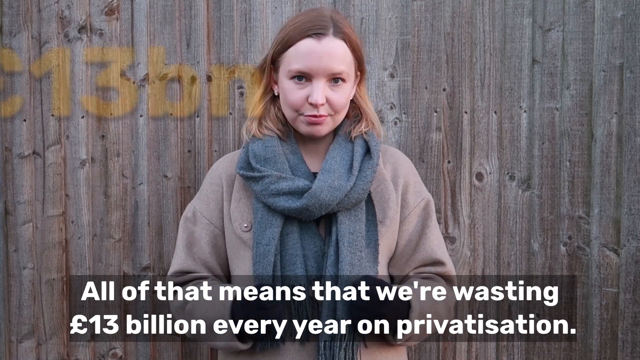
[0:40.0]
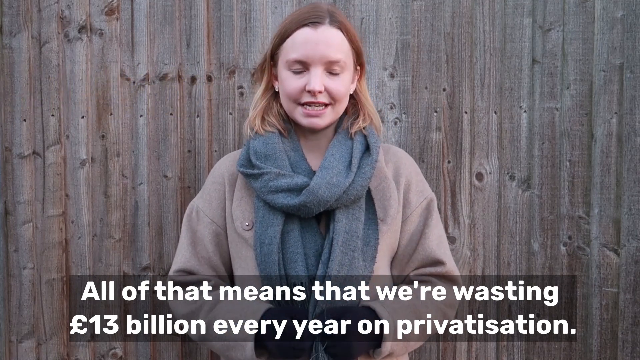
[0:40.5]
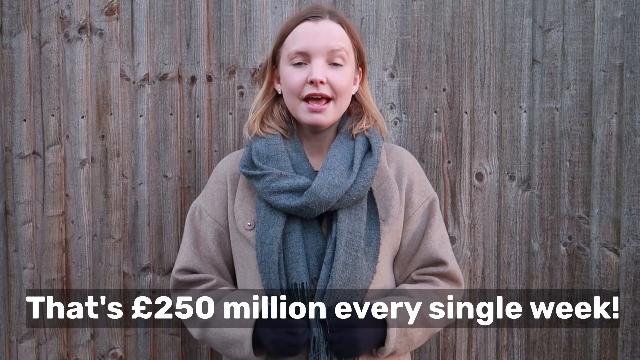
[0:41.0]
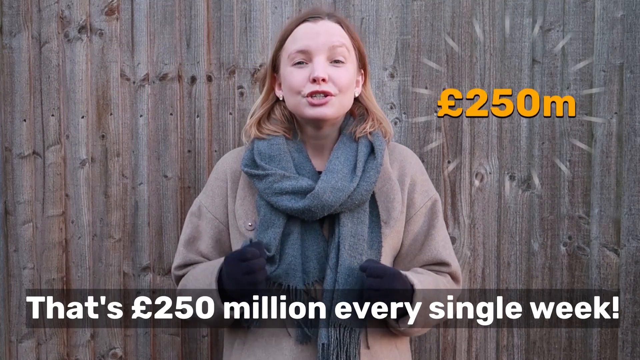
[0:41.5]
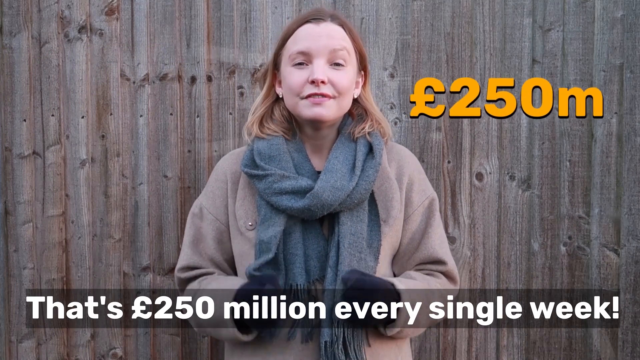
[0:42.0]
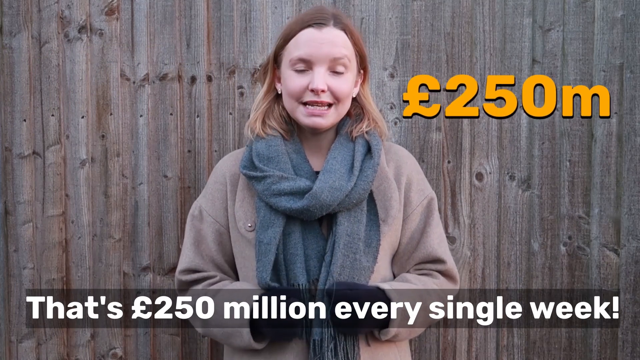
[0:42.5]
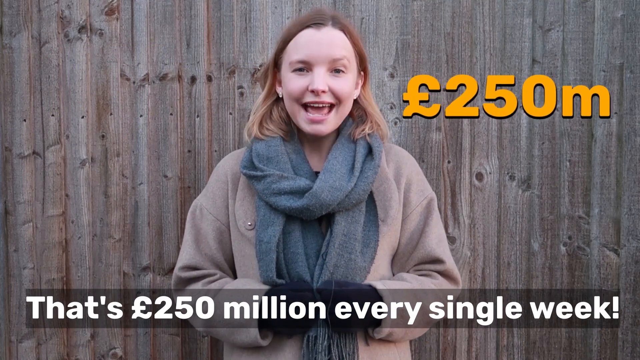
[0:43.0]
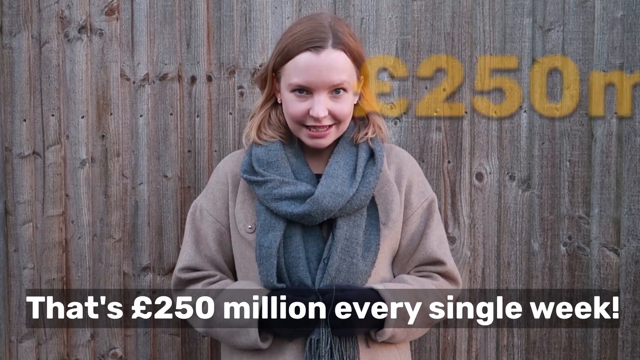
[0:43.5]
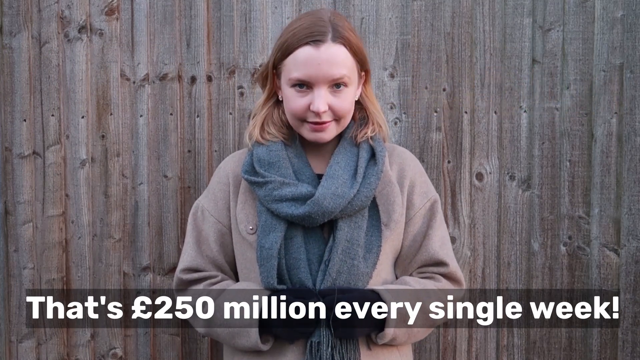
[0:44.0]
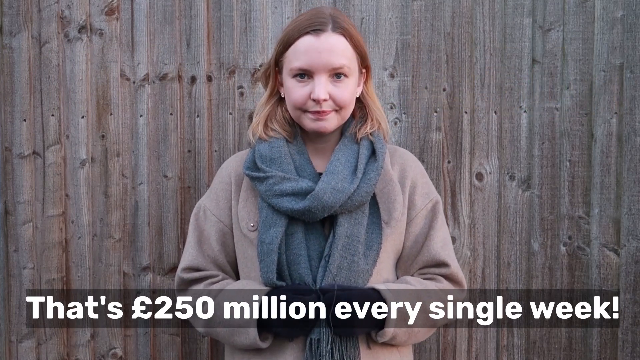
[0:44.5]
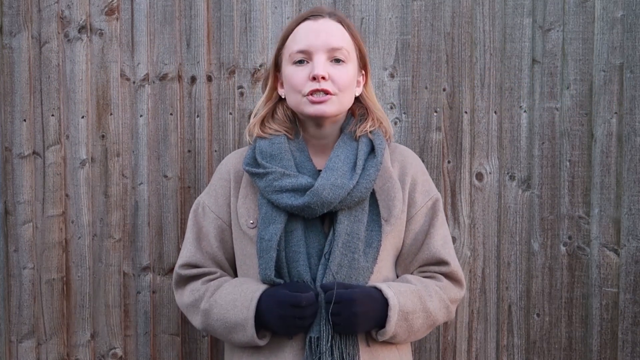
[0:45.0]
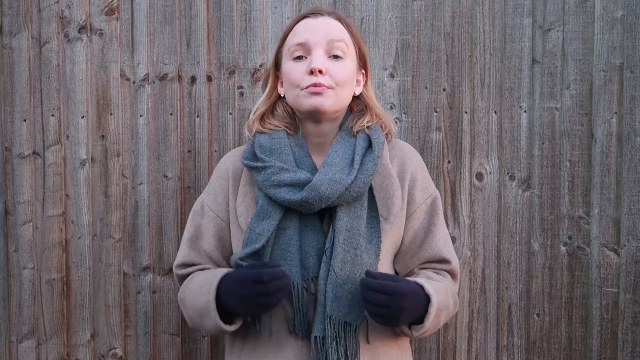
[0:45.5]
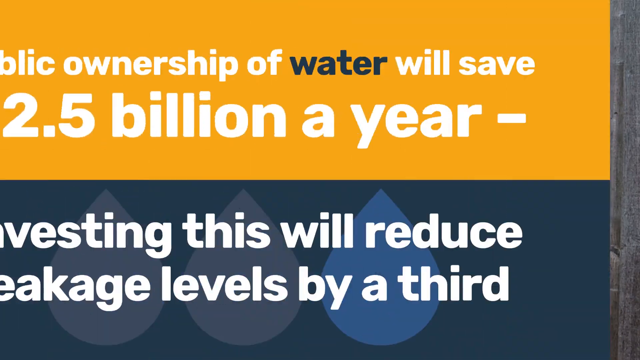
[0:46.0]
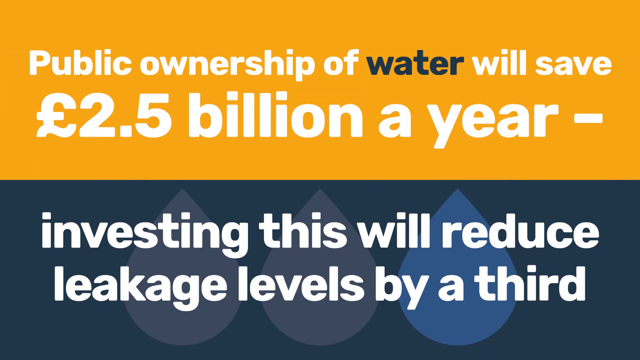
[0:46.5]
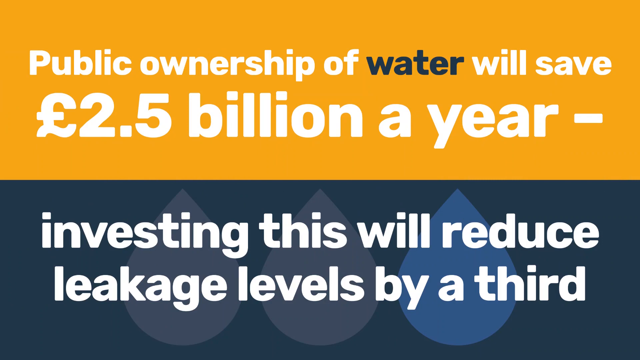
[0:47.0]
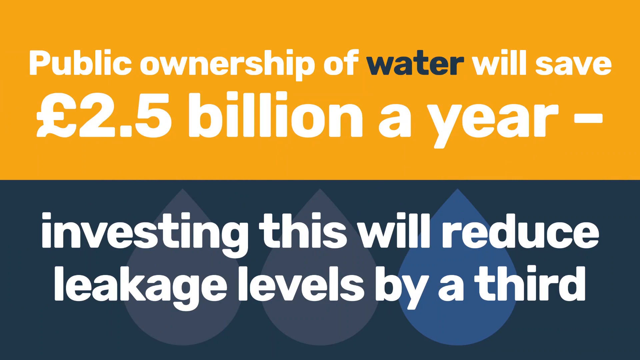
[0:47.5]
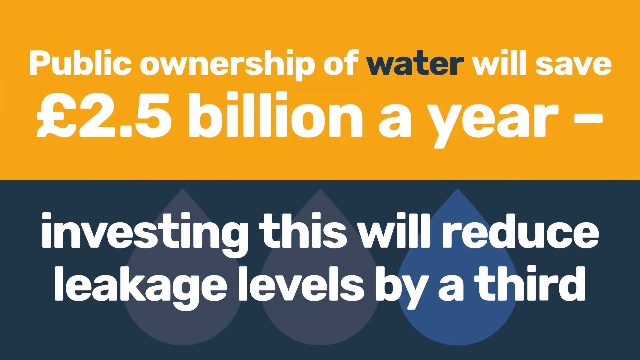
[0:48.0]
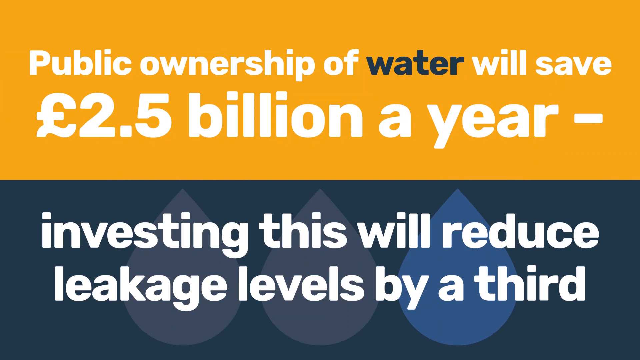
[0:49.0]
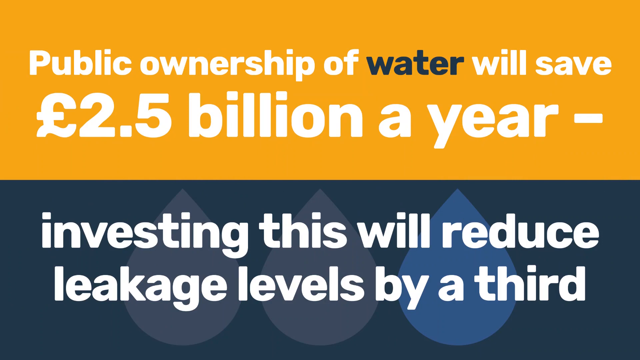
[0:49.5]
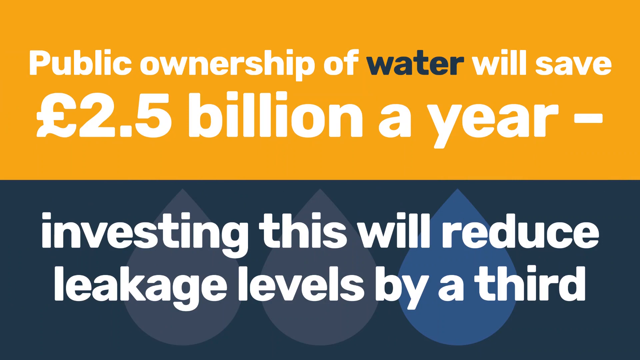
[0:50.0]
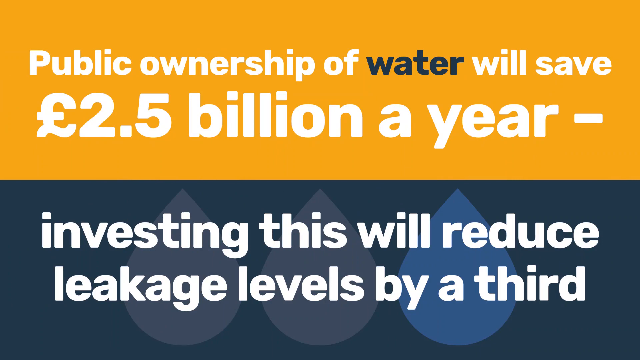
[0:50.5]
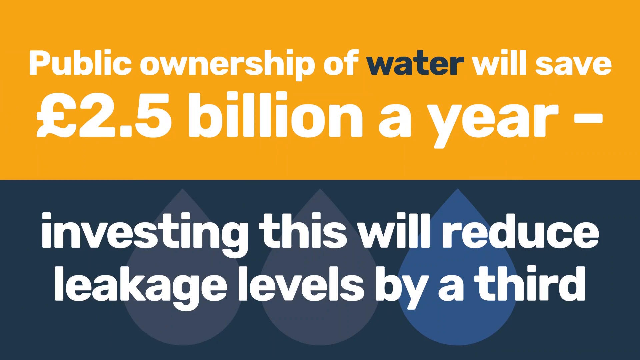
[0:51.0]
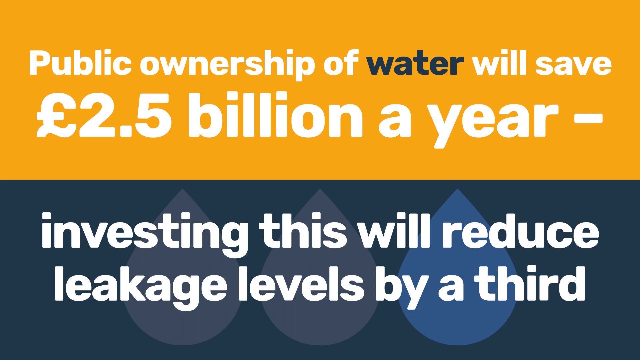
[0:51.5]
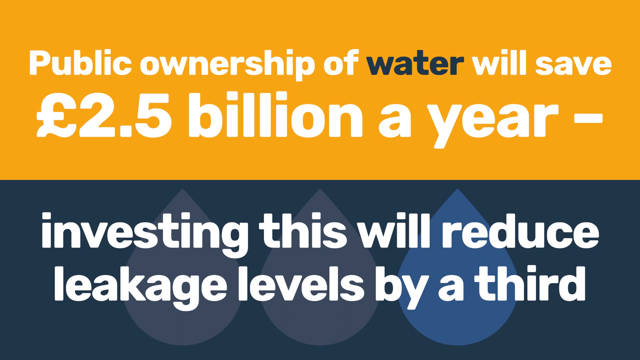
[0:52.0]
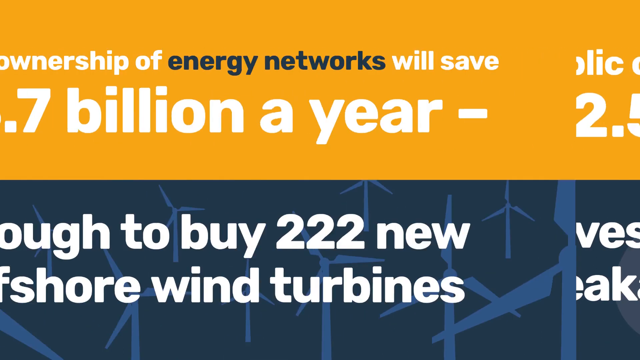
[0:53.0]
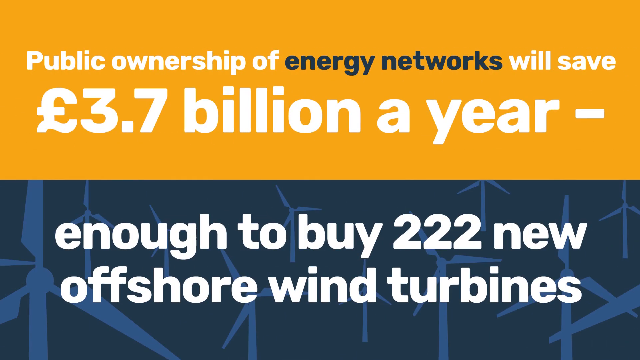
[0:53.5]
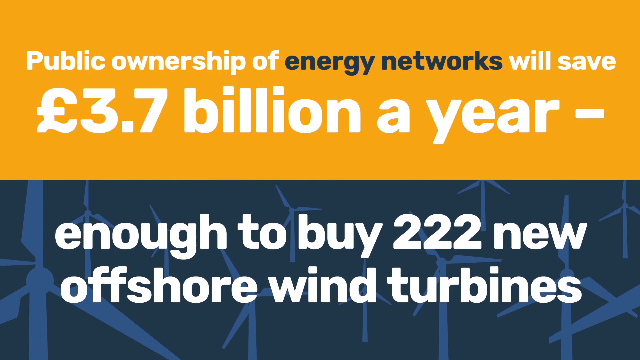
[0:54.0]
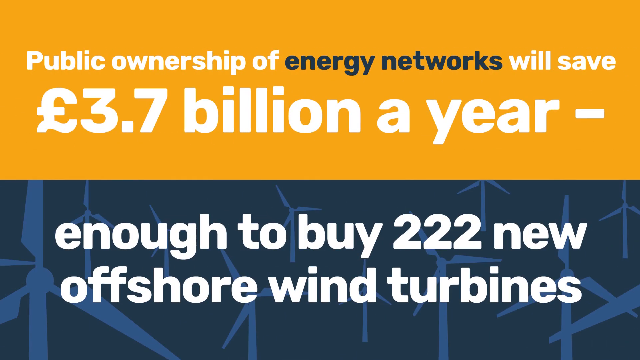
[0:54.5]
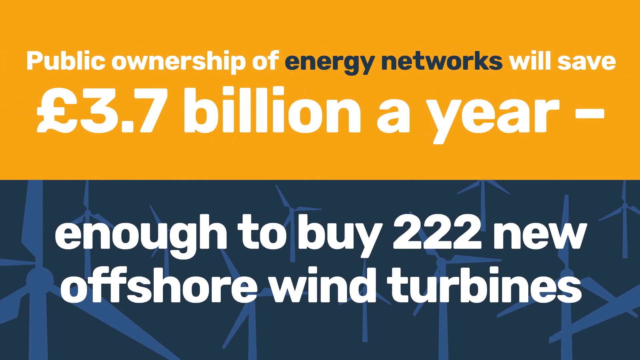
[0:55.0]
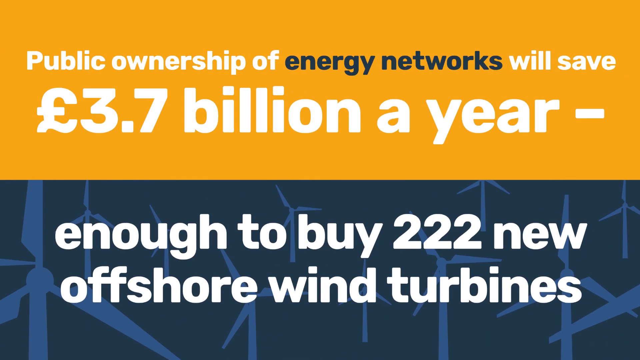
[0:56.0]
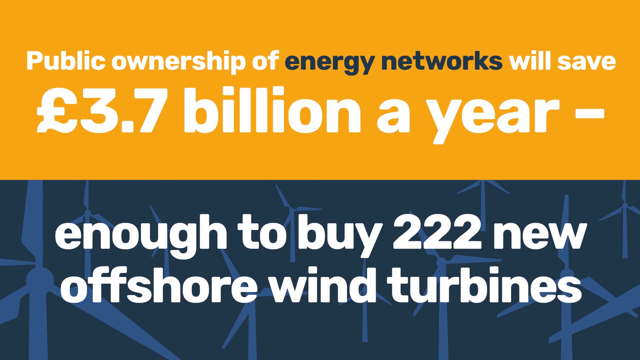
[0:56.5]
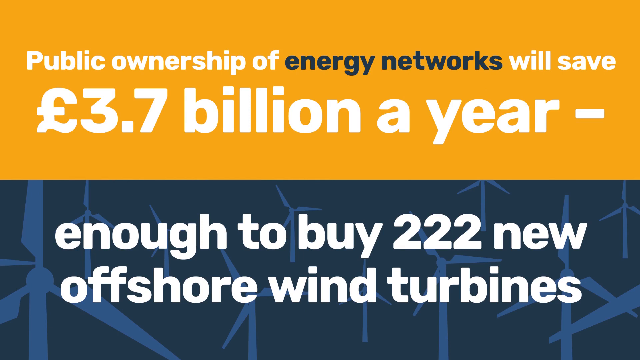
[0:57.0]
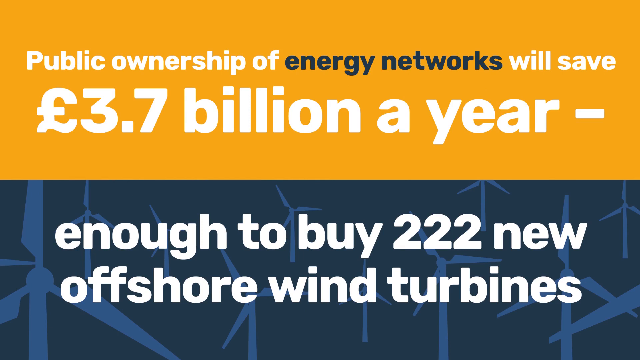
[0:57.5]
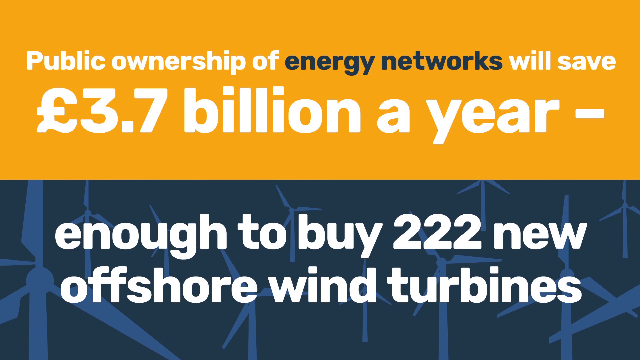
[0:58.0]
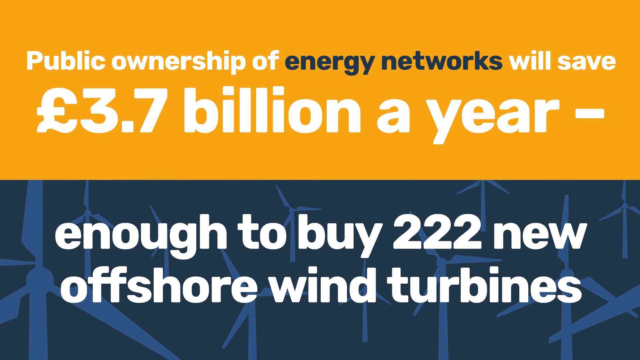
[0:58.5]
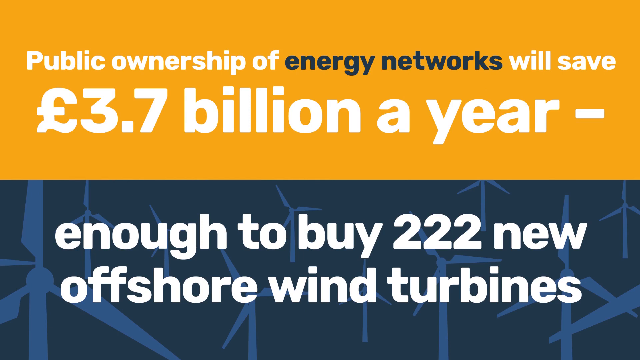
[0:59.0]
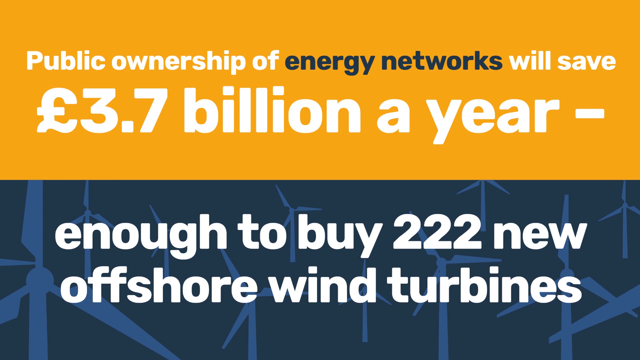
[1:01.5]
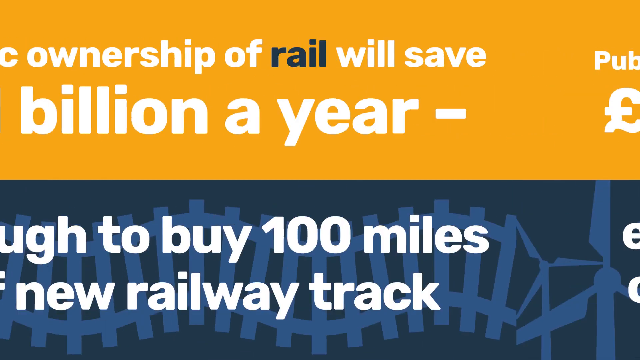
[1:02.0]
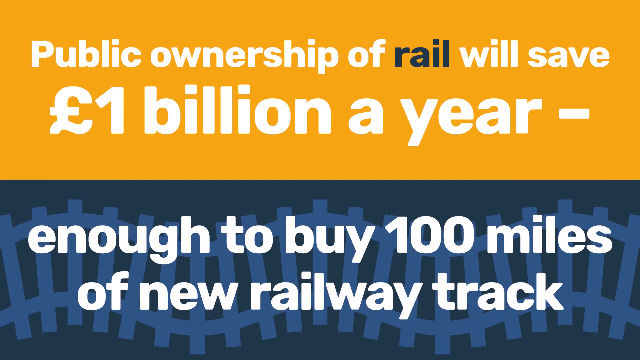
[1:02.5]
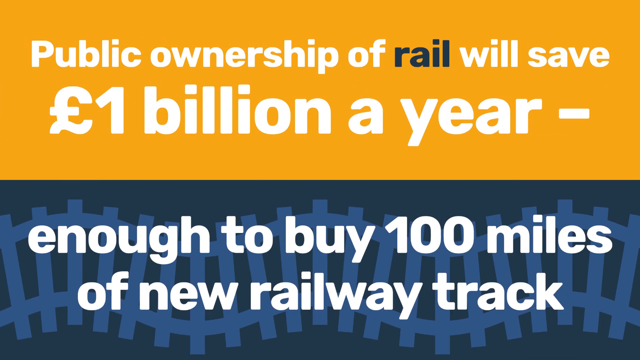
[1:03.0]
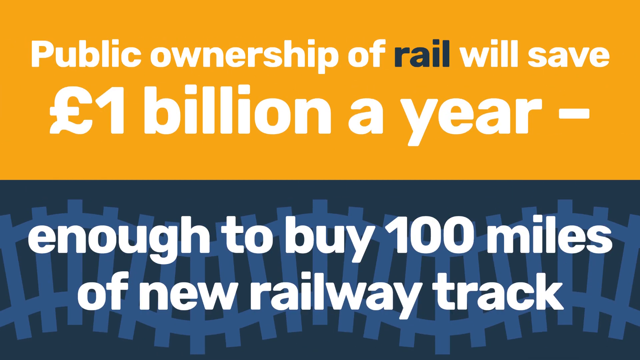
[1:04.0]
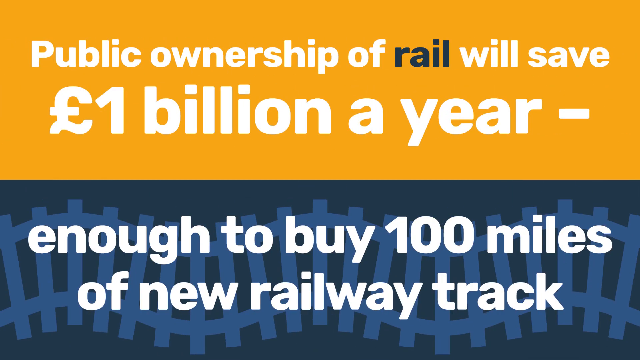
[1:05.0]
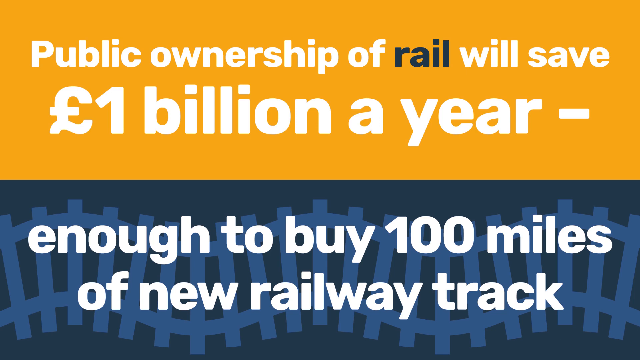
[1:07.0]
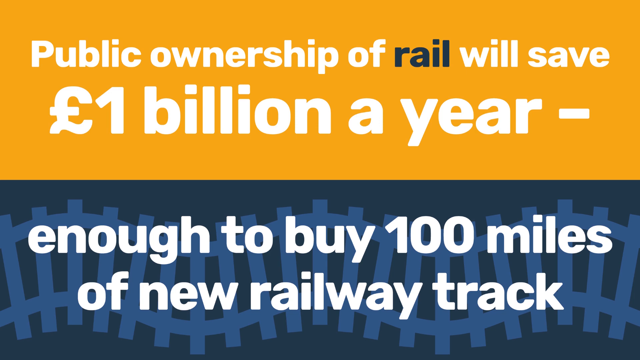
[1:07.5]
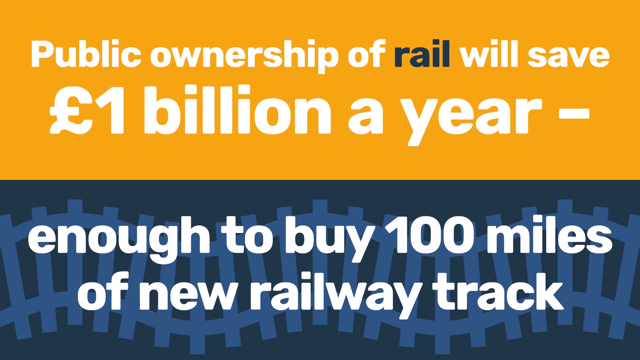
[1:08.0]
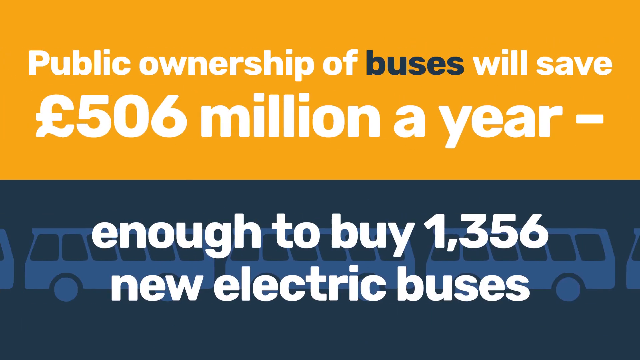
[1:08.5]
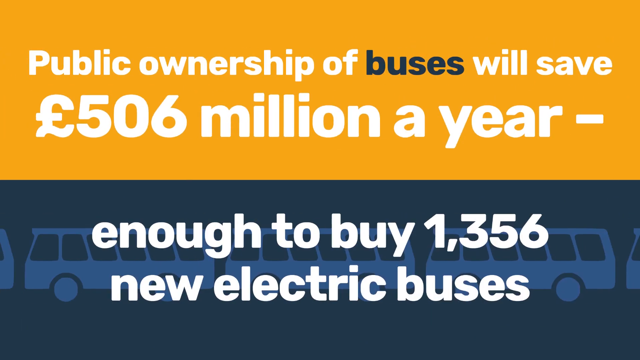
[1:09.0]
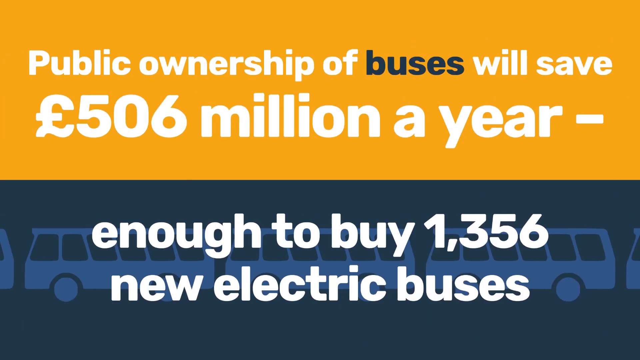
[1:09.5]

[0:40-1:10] A series of slides appears, each with a yellow top and a blue bottom. The top shows how much would be saved and the bottom gives a comparison. The first slide states a saving of 2.5 billion euros a year, investing to reduce leakage by one third. The second slide concerns offshore wind turbines, saying it is enough to buy 222 of them. Further slides say public owners of rails could buy a hundred miles of railroad tracks and that buses would have enough for 1,356 new electric buses.